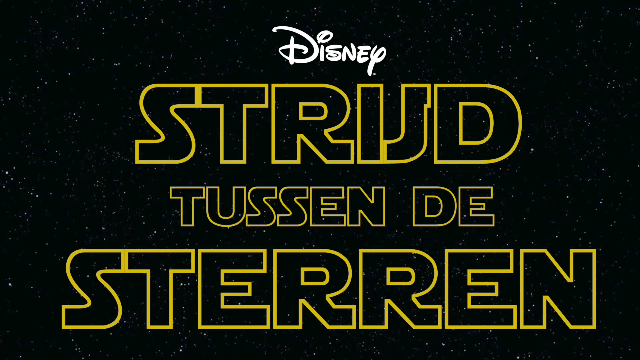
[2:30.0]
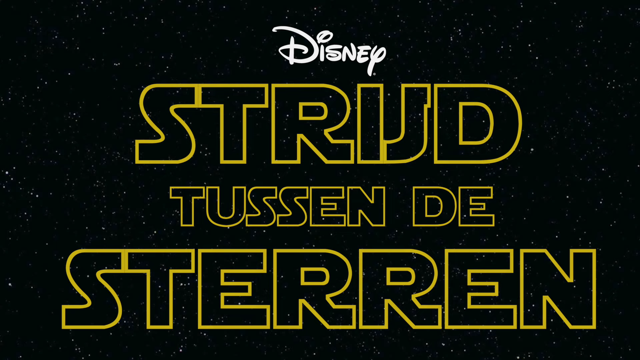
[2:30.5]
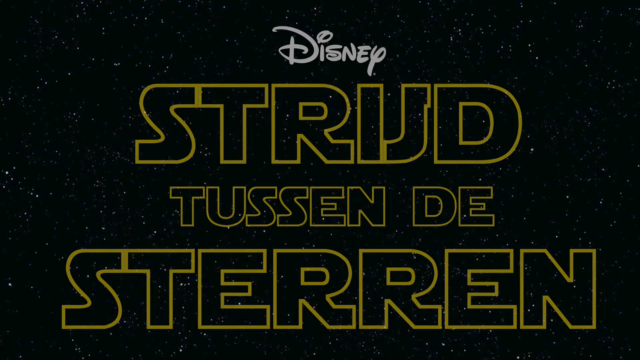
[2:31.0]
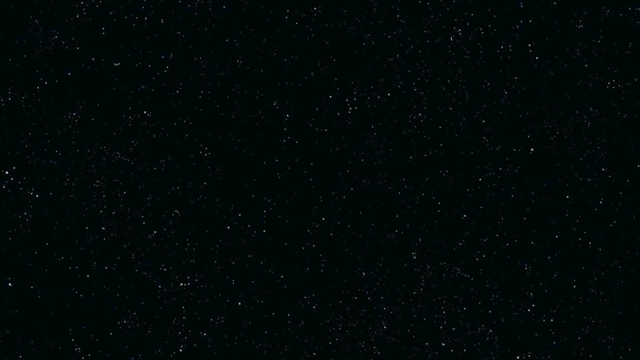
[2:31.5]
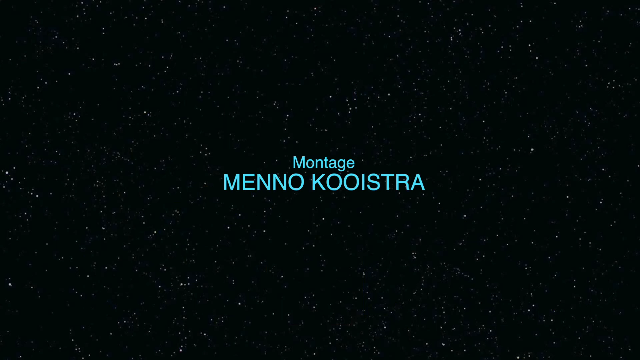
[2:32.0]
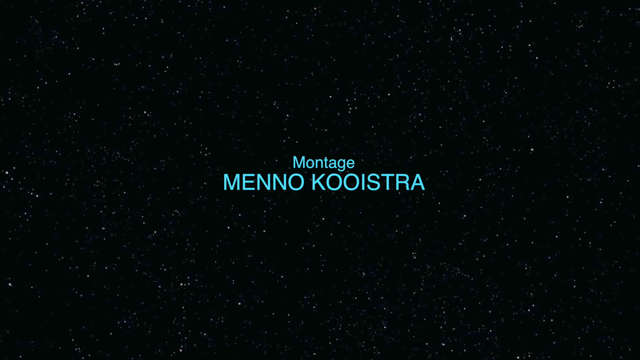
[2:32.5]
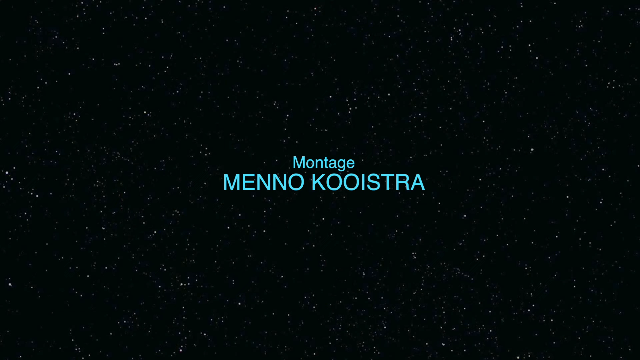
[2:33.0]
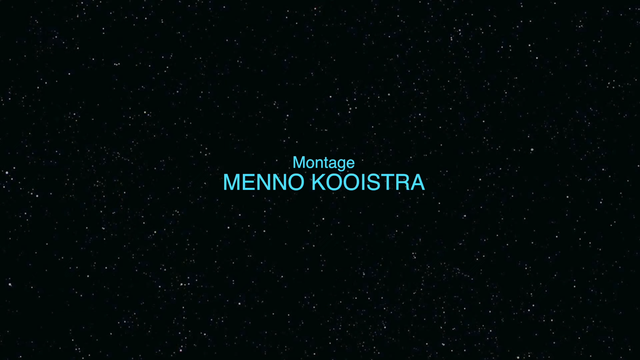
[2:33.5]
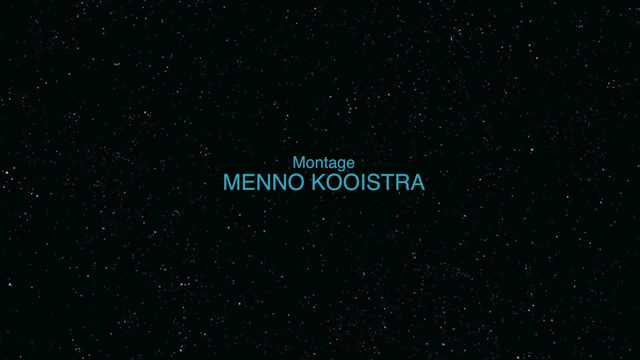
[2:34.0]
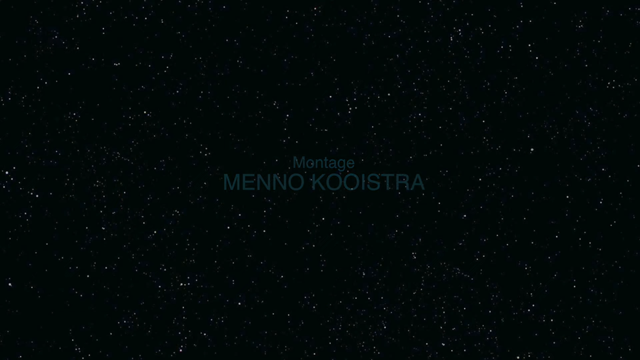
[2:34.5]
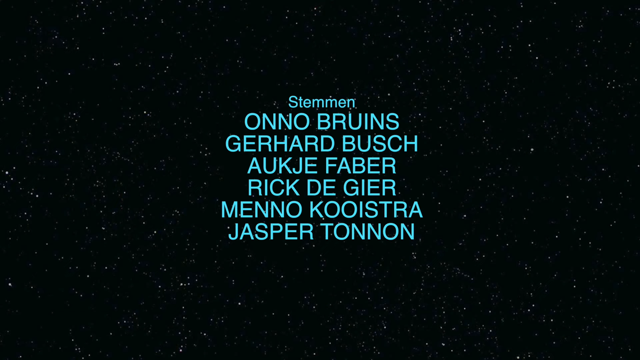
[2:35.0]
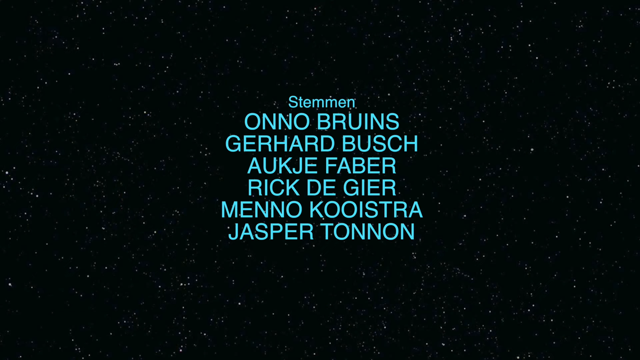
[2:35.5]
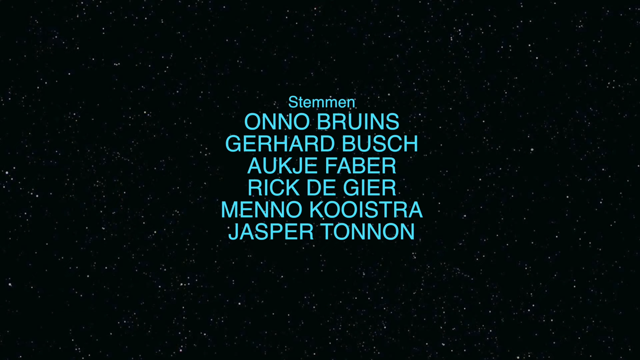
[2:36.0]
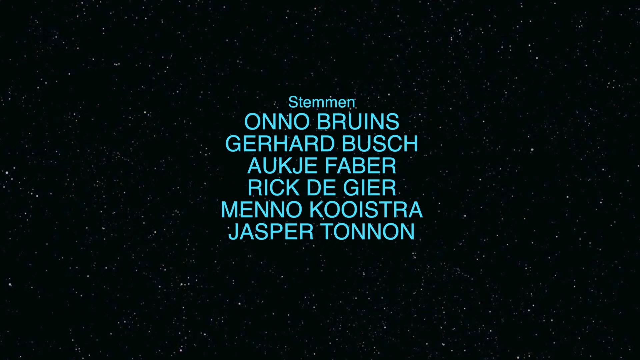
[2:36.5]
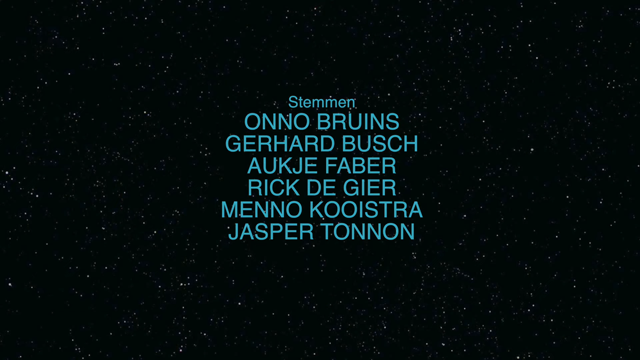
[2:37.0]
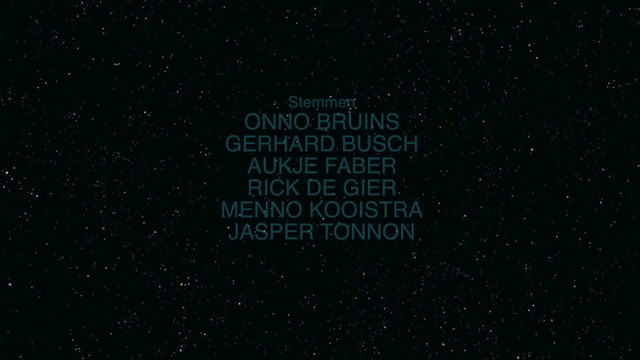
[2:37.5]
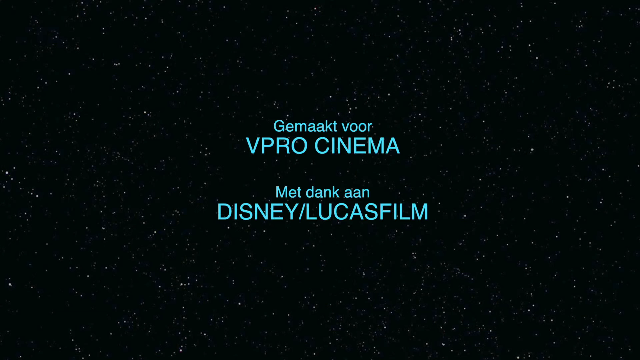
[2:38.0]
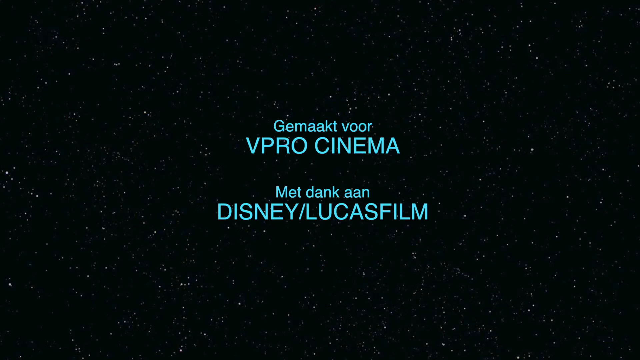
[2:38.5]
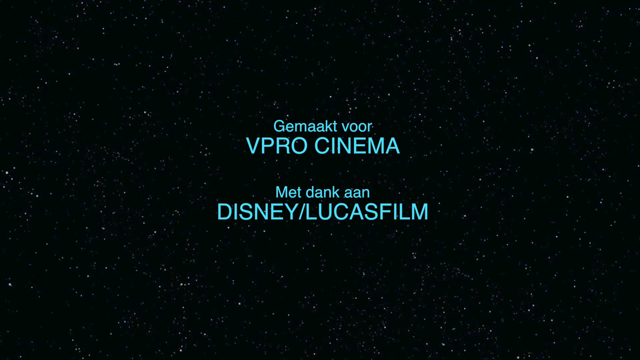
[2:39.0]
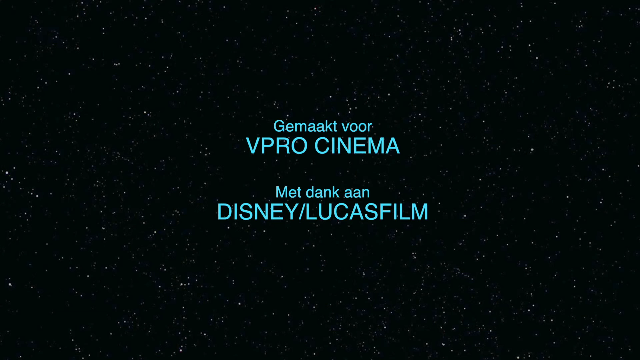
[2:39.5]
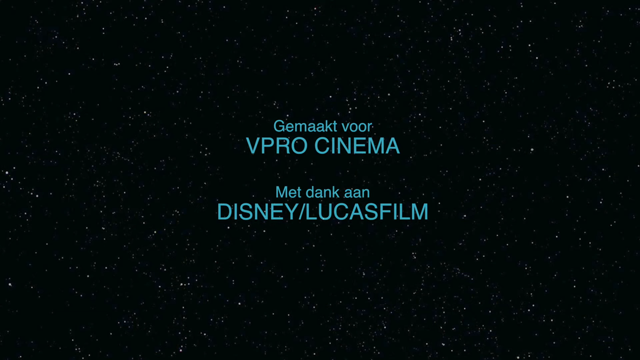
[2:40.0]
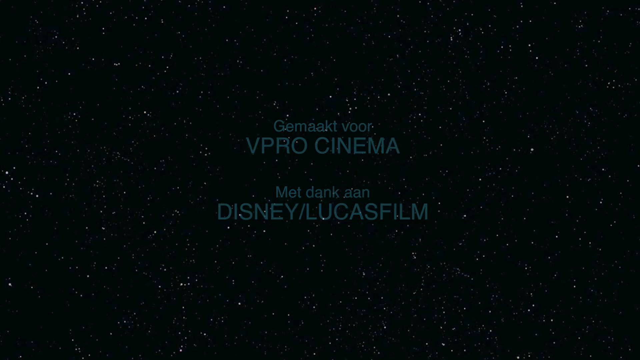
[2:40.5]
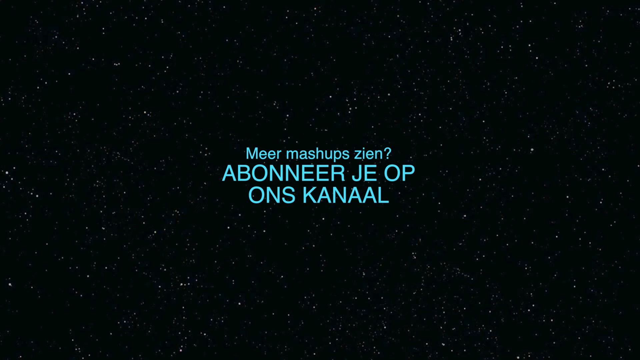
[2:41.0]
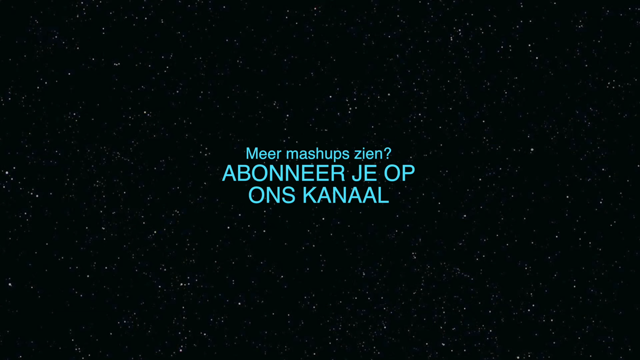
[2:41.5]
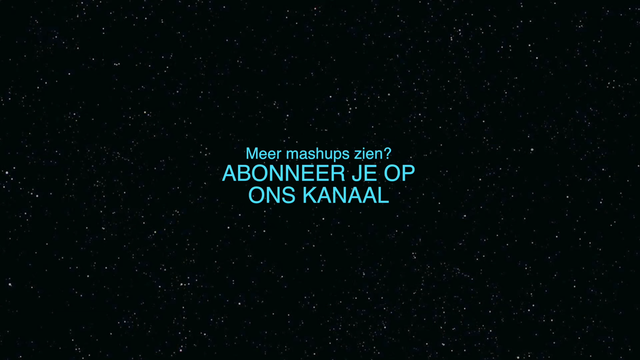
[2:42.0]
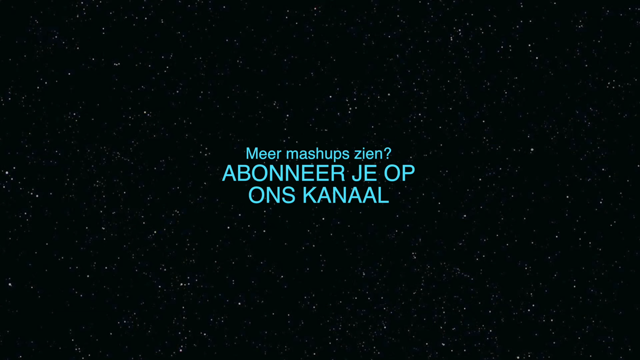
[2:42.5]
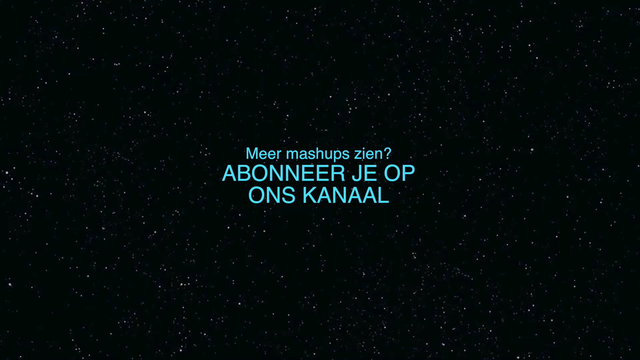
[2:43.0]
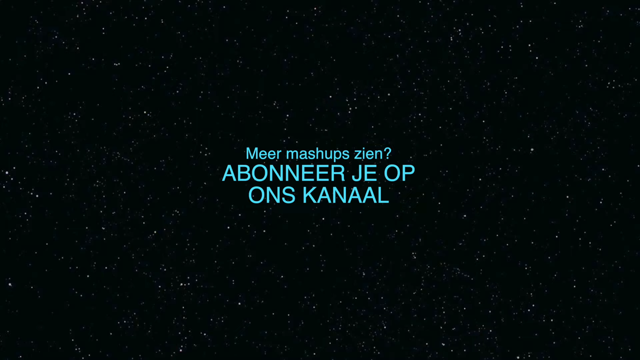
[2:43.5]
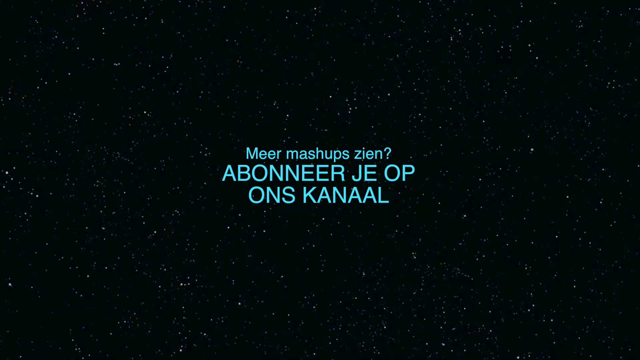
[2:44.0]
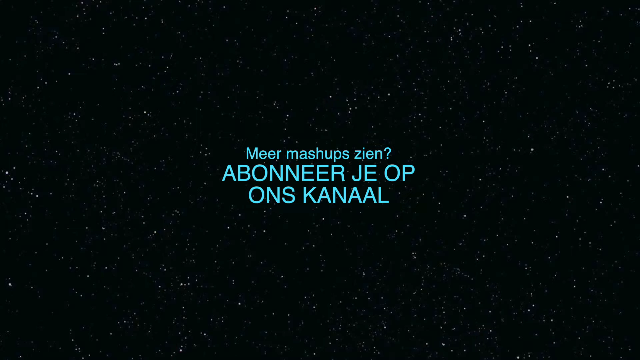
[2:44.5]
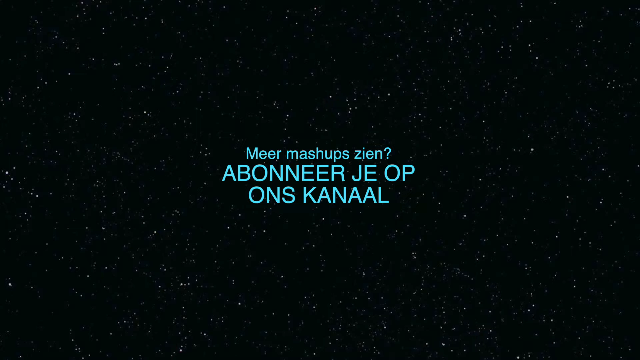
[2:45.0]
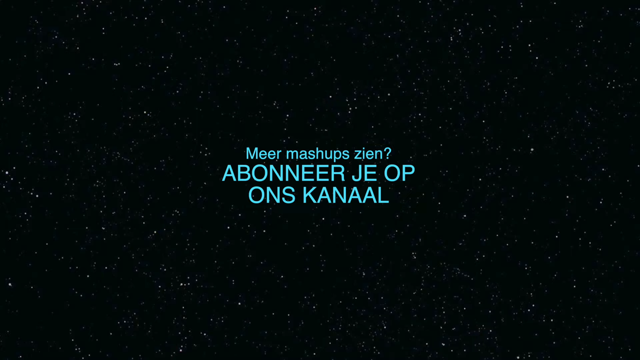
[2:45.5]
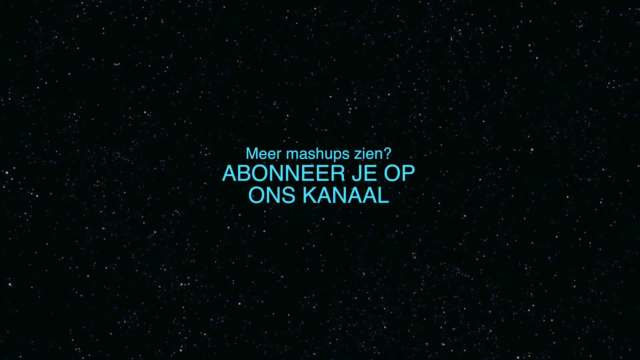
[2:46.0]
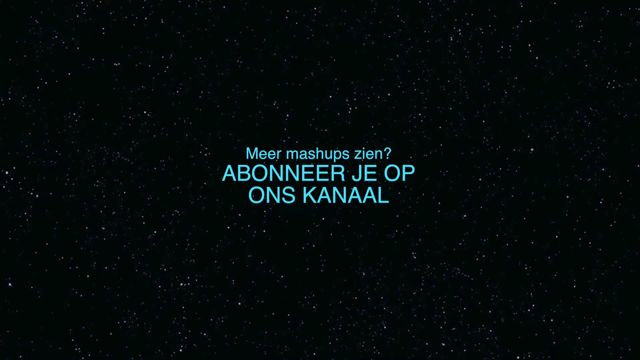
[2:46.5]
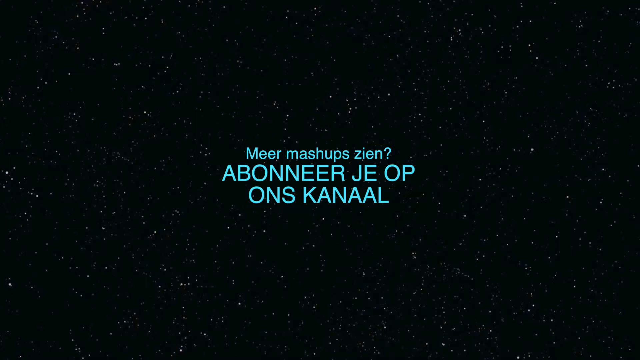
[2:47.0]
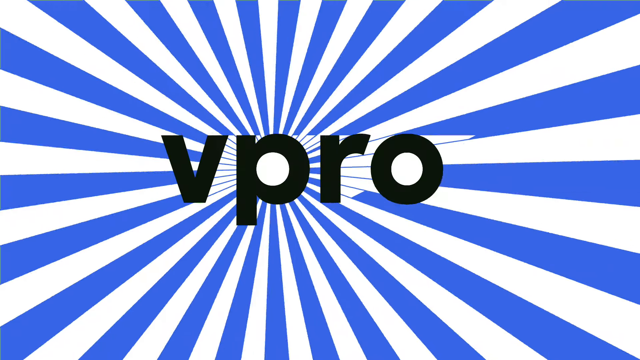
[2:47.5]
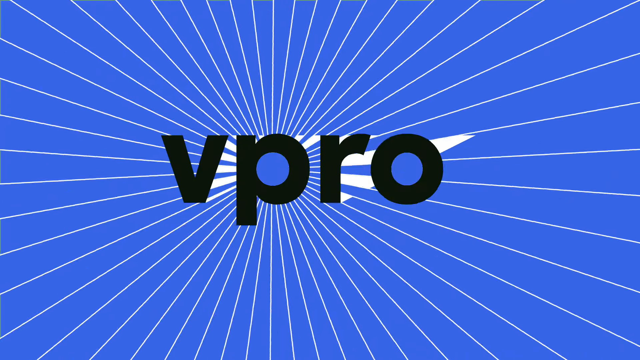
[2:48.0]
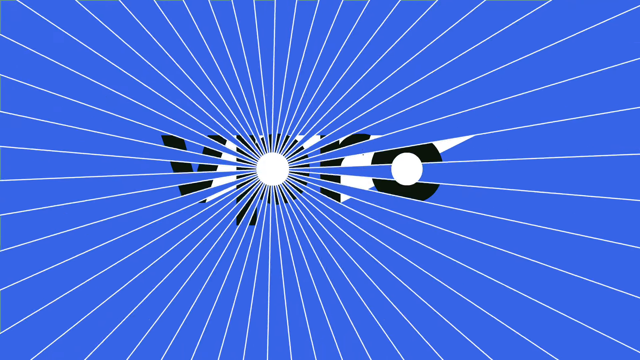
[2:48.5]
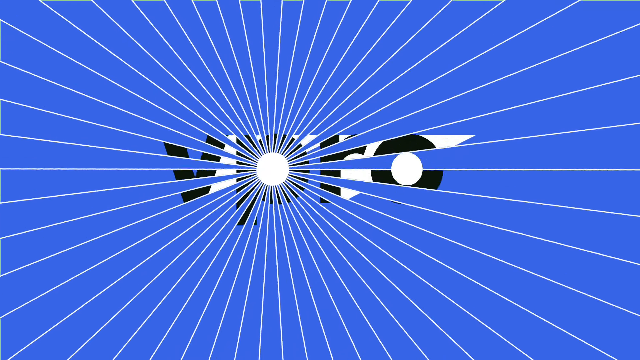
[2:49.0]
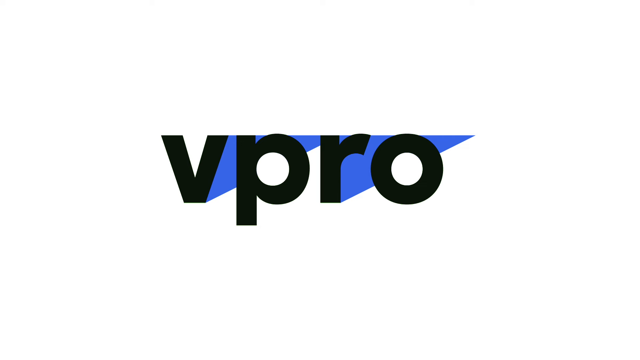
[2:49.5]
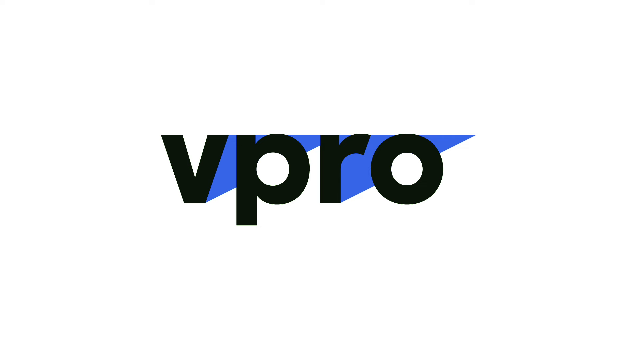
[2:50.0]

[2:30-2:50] The end credits appear, with names including "Menno," "Koistra," "Rick," "Faber," "Gerard," "Ono" and "Jasper," written in a foreign language and probably listing the cast. Credits for Disney and Lucasfilm appear, followed by the sponsor, Veetro. The video appears to be a parody of Star Wars made of cutout scenes.